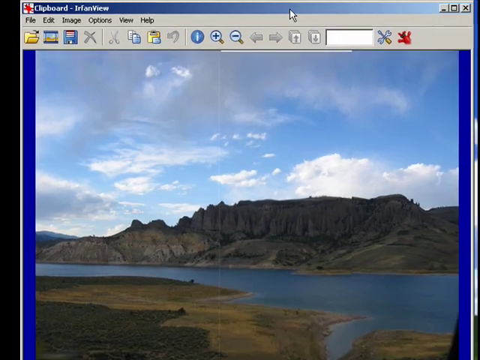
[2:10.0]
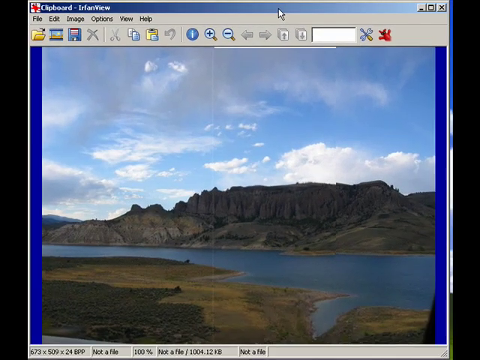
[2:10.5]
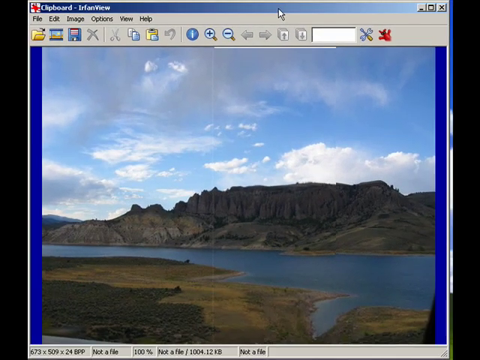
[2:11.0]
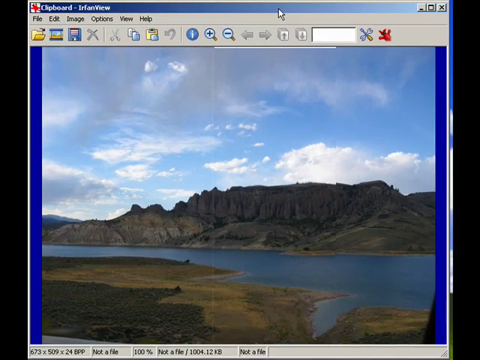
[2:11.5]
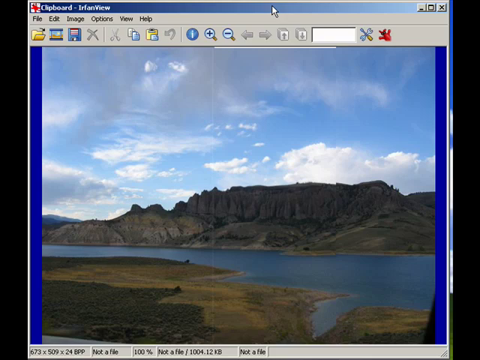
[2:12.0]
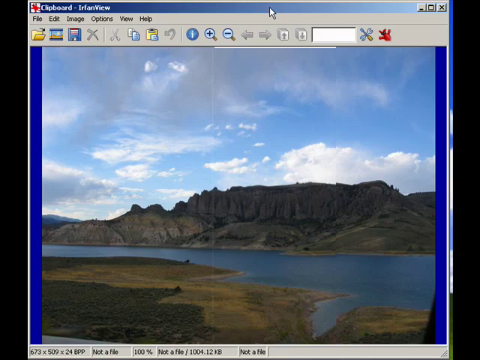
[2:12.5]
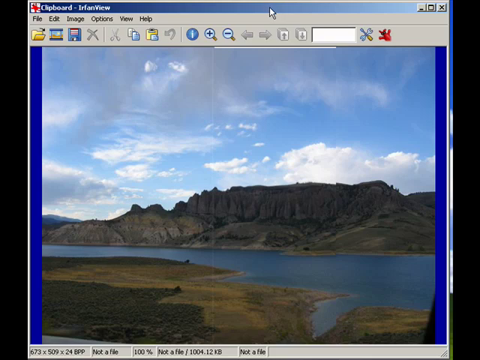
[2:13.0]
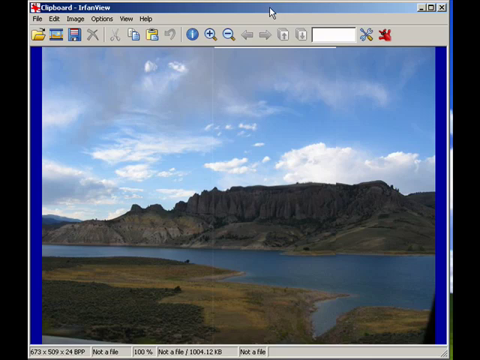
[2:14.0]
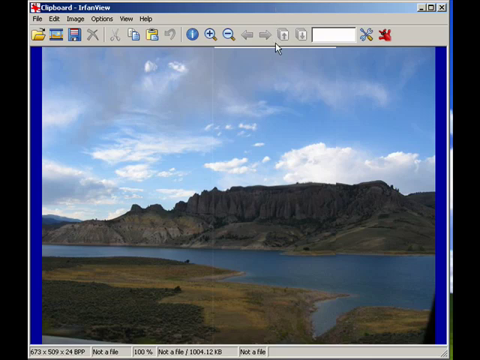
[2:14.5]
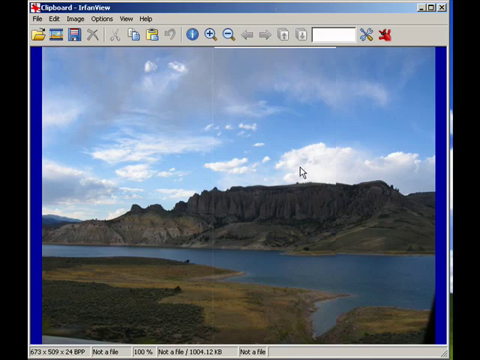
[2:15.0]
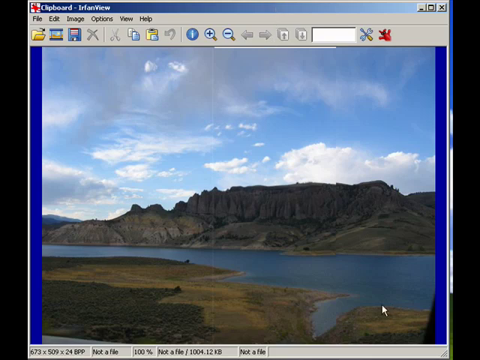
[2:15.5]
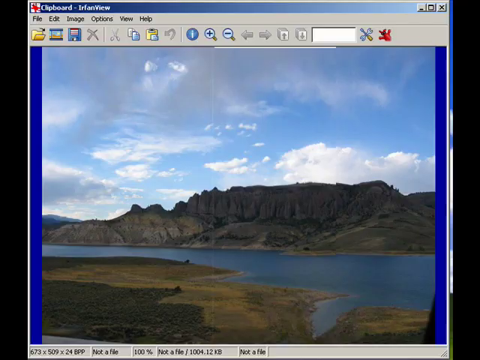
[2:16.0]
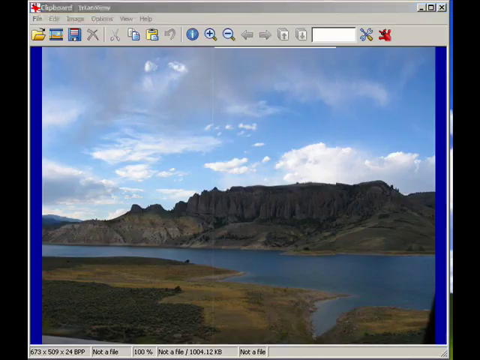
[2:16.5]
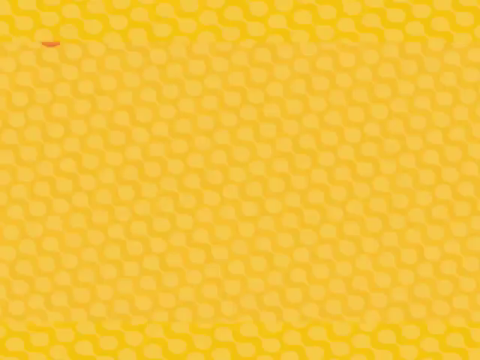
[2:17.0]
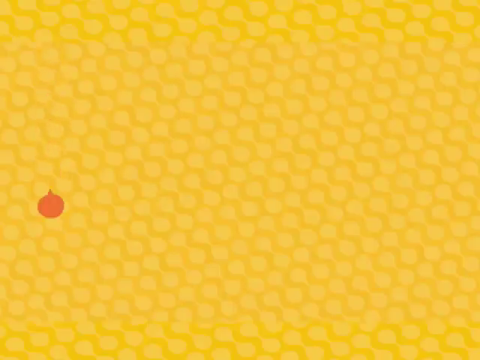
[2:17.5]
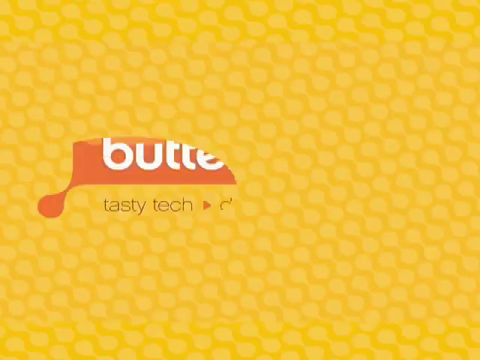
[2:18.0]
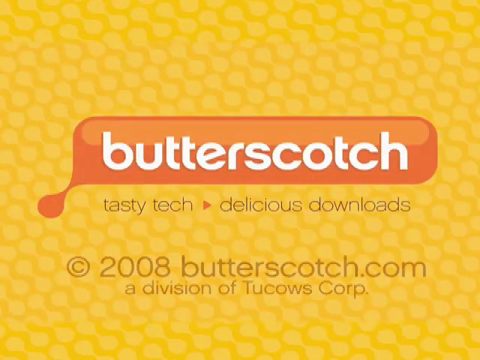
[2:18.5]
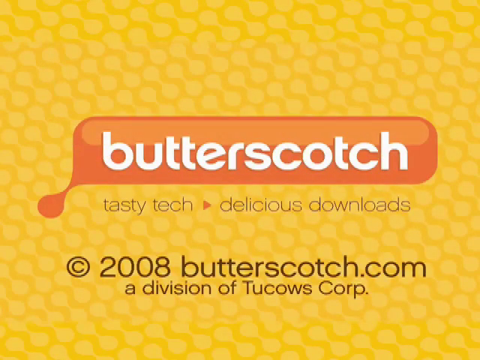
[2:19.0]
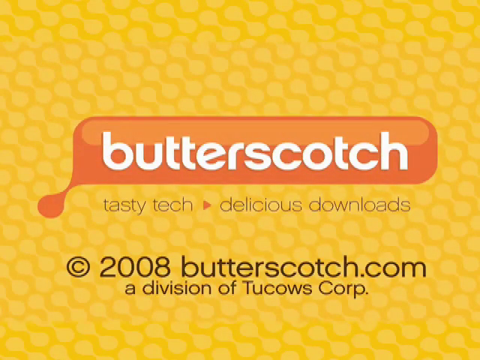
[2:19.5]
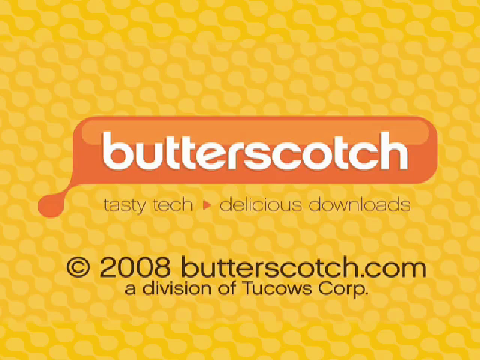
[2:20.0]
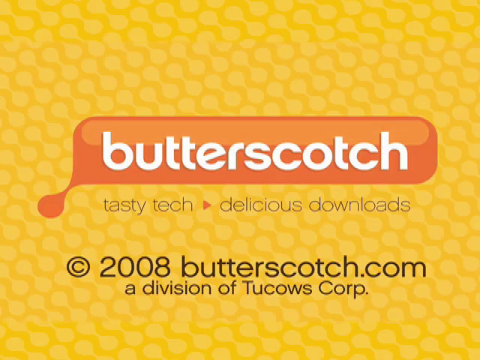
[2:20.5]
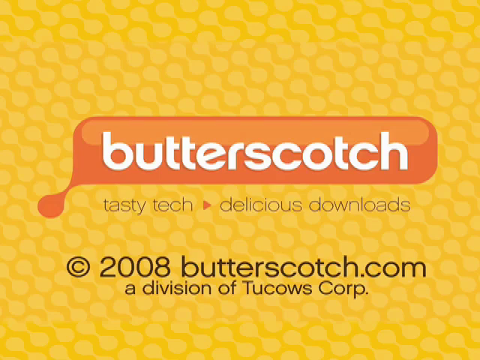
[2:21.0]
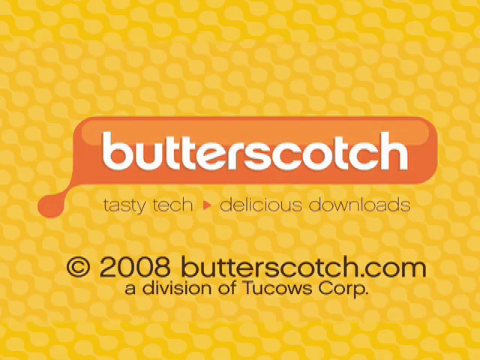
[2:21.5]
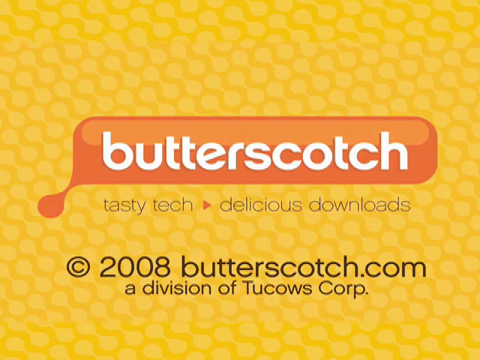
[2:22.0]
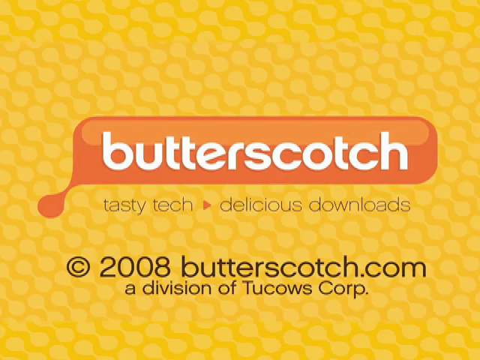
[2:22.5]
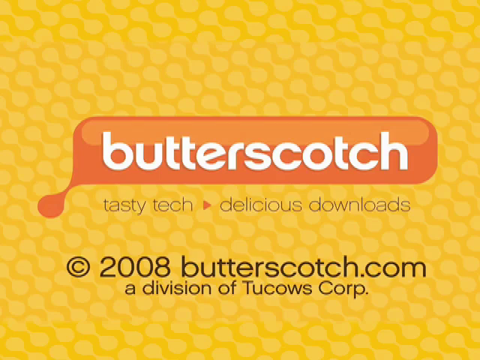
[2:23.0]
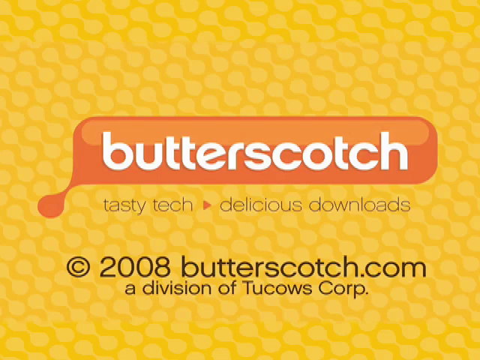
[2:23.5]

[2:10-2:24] The toolbar options that can be clicked are colored and the others are grayed out. From left to right there is a file folder, a thumbnail-like icon, a blue disc, a copy-like icon with two documents, one blue and one white, a clipboard, a blue circle with an "i", a magnifying glass with a plus, a magnifying glass with a minus, and tools, including what looks like a red bird. The view zooms out a little with the cursor at the top near the blue bar, then it goes out of view and returns to the corn-looking background. It says "butterscotch" in white again, with "tasty tech" underneath along with an arrow, "delicious downloads", and a copyright in big, kind of brown text: "2008 butterscotch.com division of tucows Corporation".